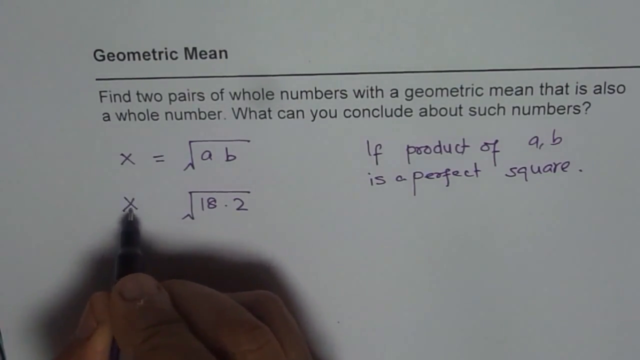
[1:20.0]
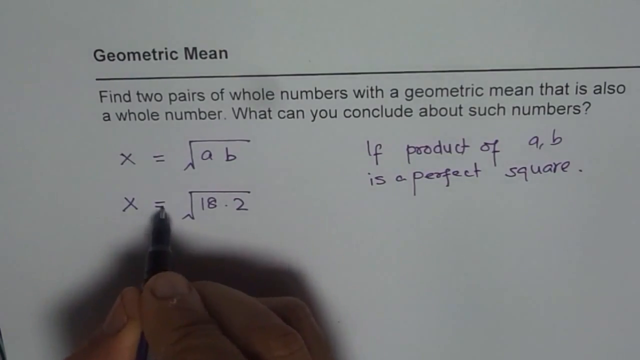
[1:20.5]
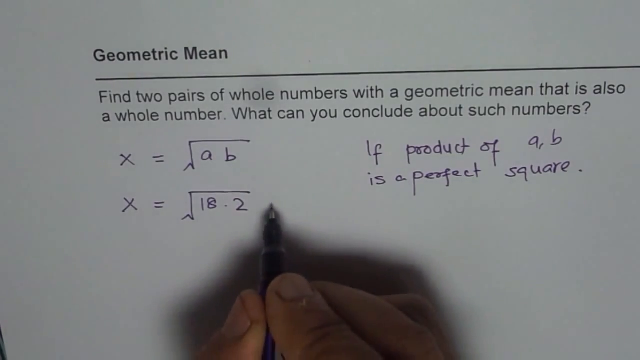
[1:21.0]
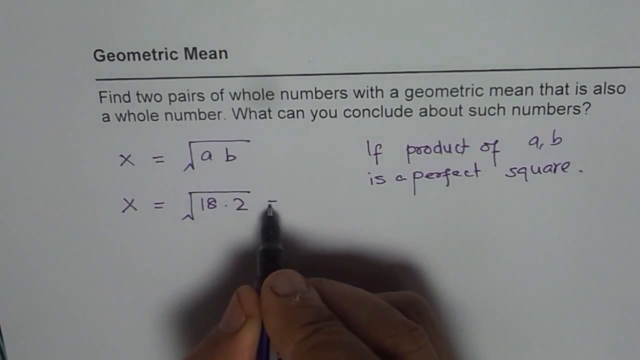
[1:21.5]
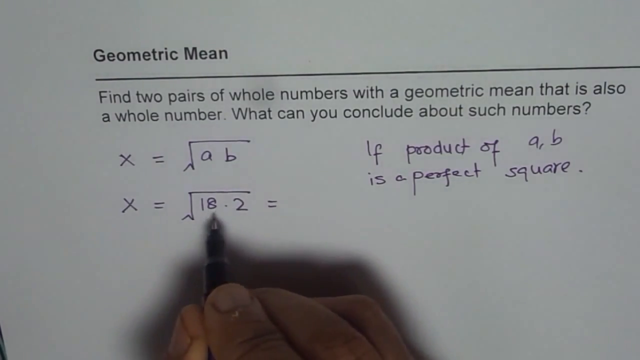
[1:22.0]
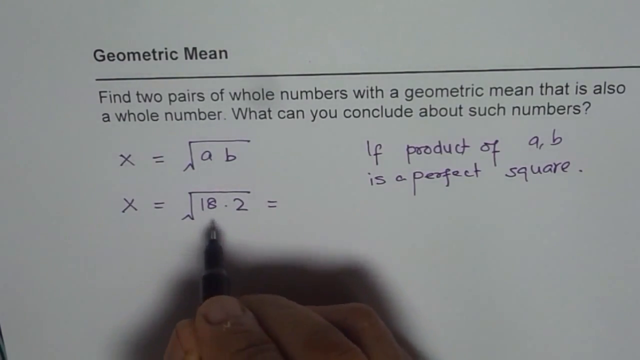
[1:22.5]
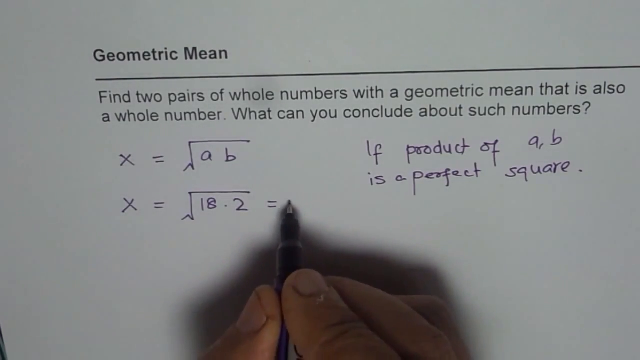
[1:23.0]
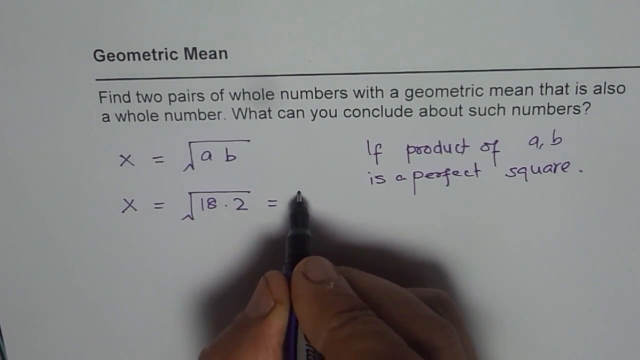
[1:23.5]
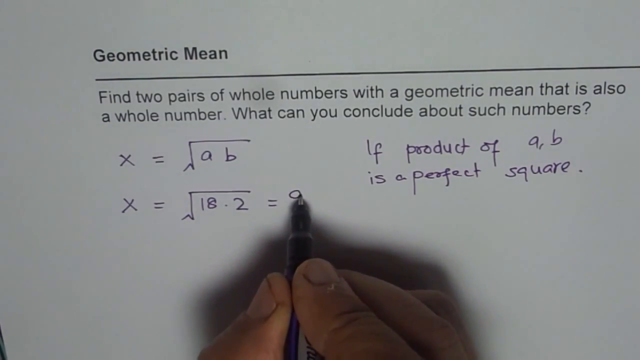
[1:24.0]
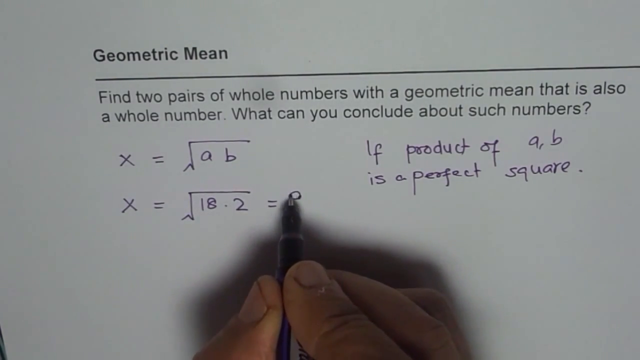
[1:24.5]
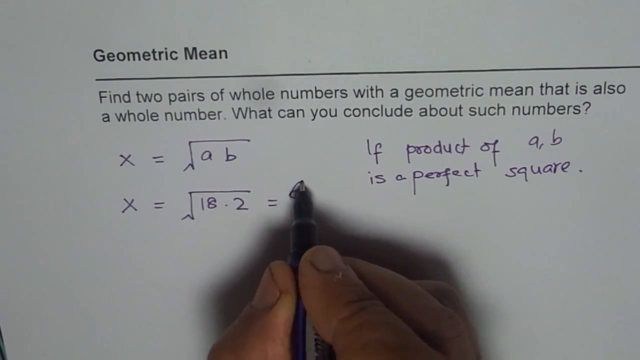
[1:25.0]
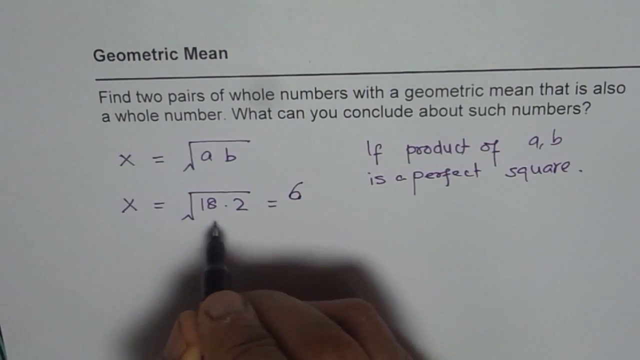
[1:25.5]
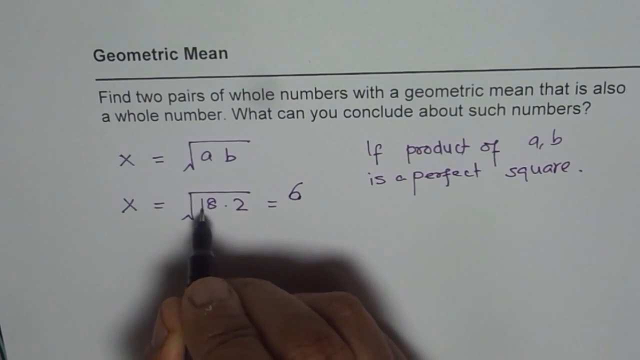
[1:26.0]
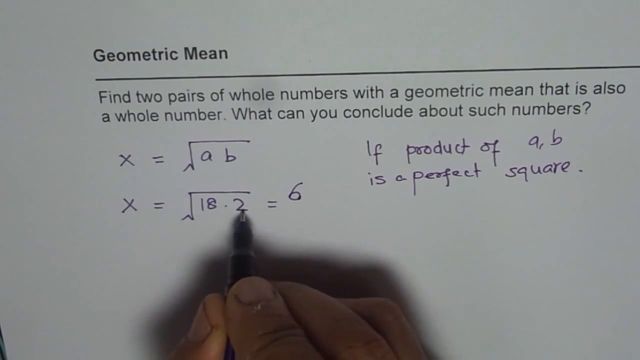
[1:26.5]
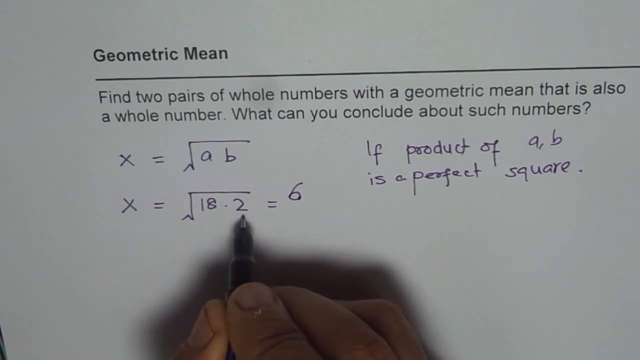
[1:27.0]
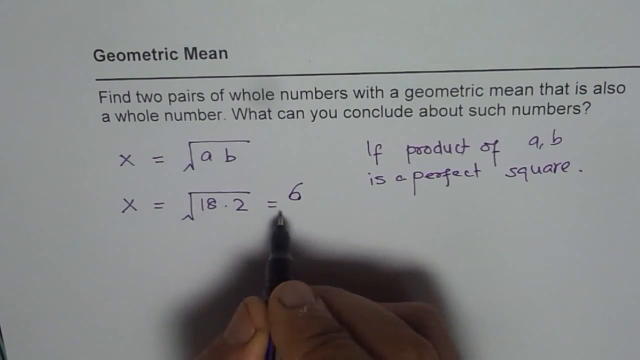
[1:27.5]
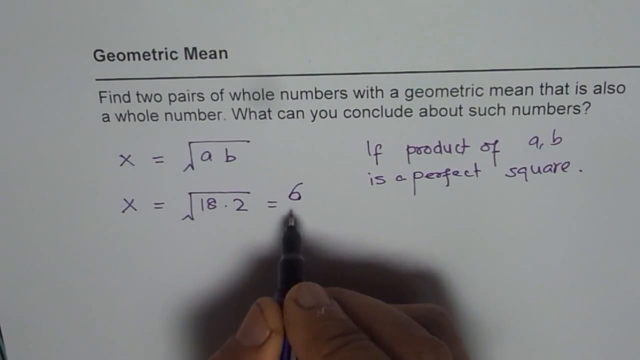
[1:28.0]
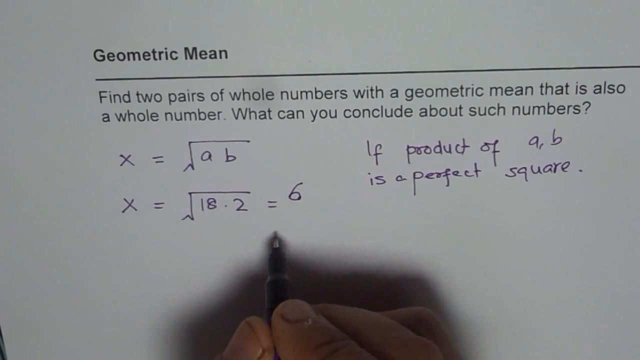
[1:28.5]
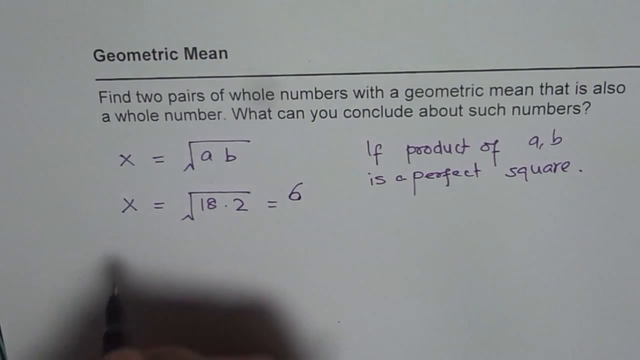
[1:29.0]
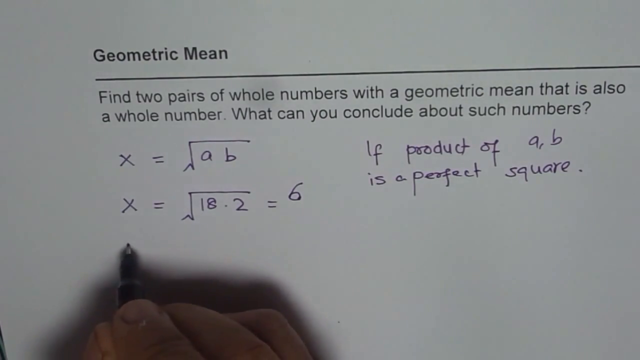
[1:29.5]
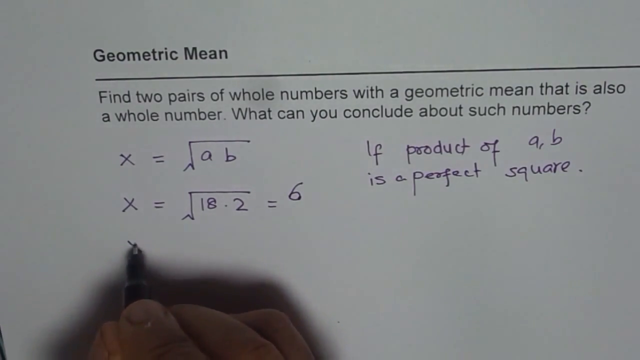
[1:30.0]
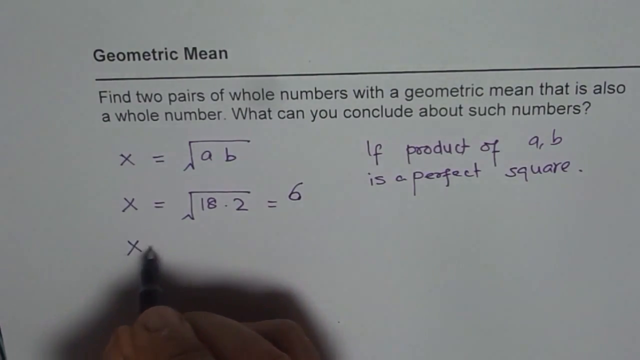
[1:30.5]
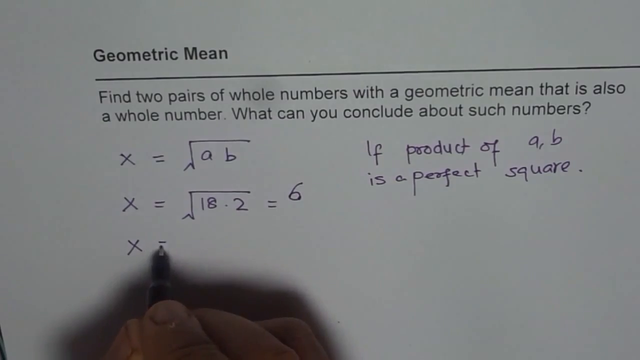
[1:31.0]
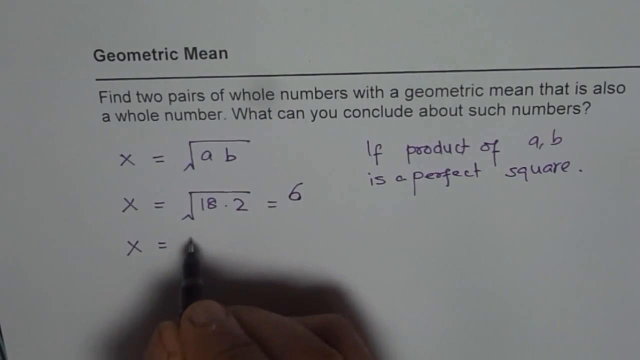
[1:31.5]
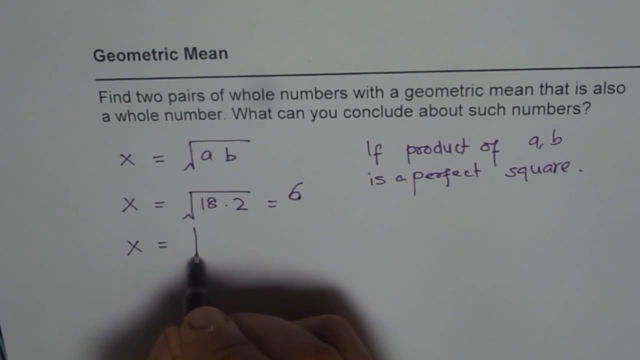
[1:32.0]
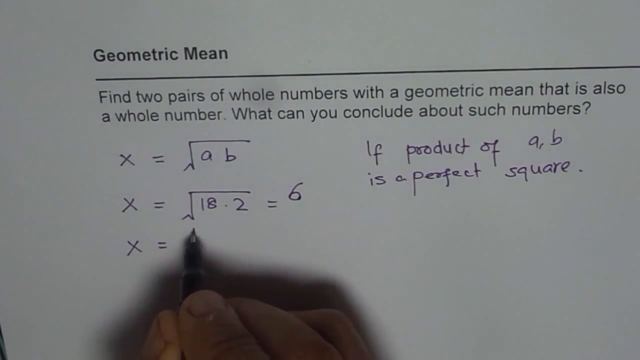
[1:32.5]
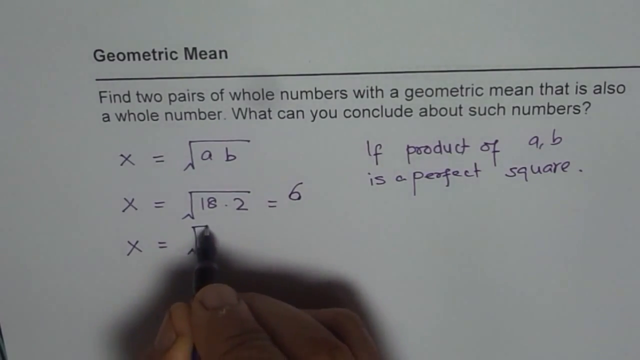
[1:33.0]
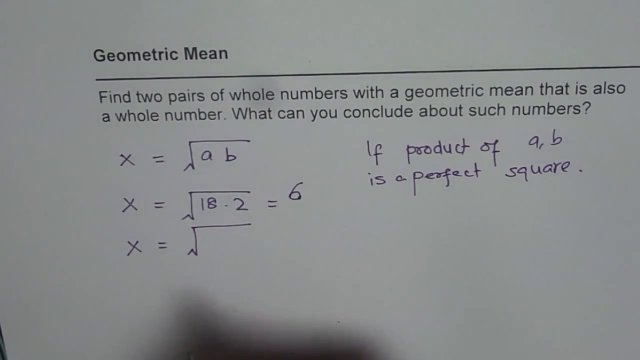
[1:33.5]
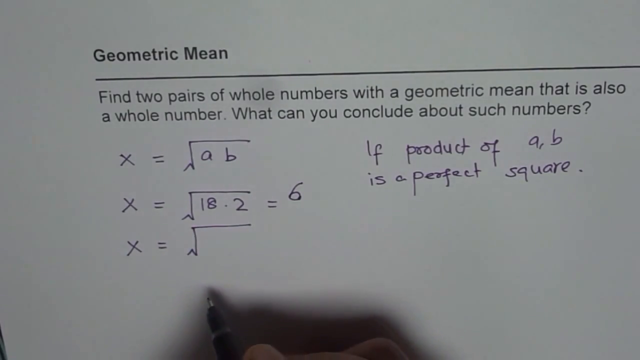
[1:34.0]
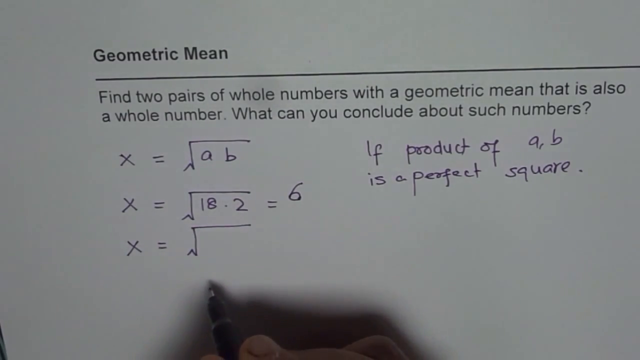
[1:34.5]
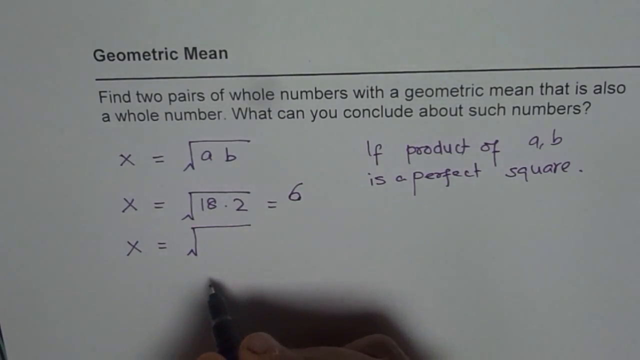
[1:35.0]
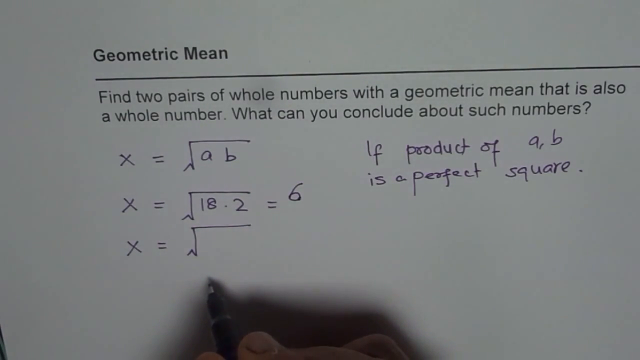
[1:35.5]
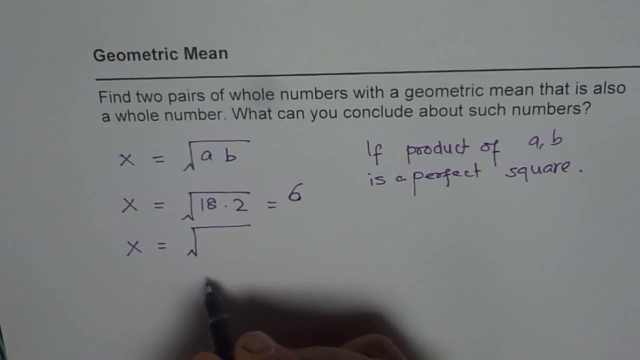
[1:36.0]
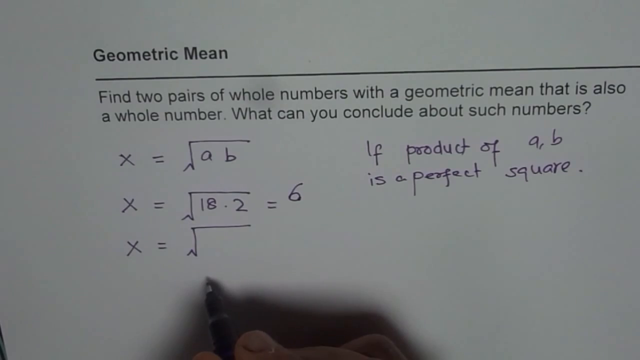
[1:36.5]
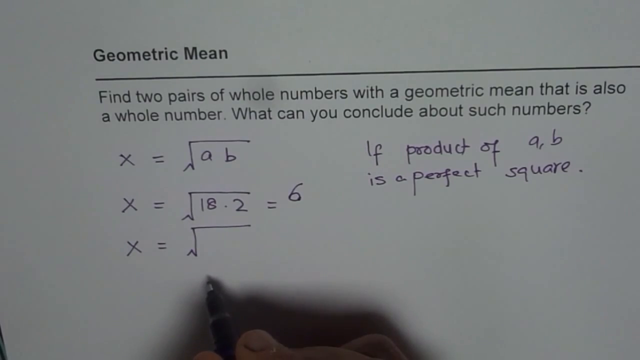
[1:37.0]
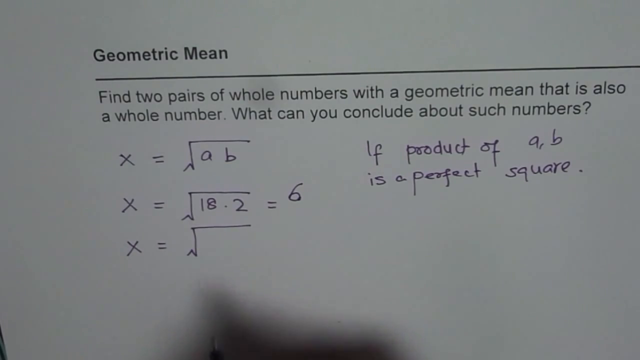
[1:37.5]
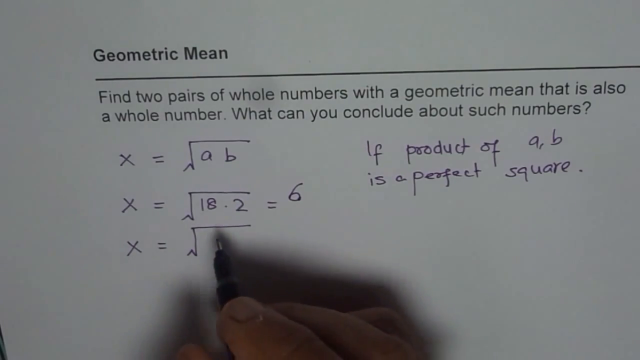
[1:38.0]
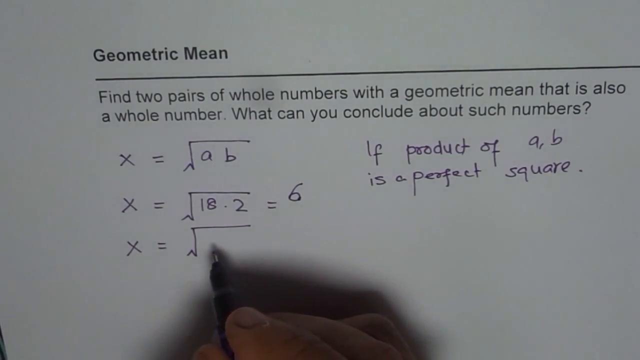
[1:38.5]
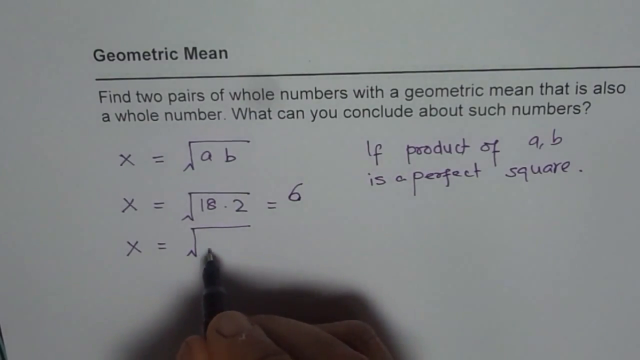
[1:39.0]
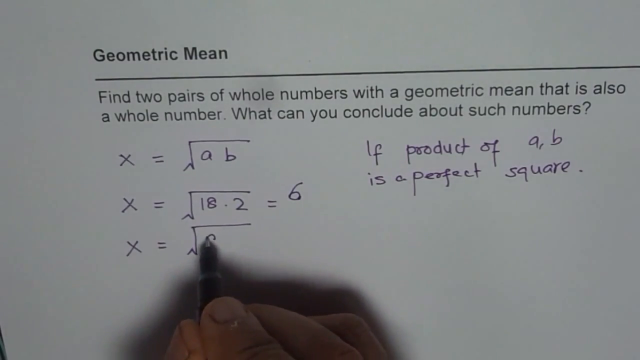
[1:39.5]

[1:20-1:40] The man, with dirty fingernails and cuticle problems, uses the black pen. He writes an equal sign between the X he just wrote and the division box with 18.2 in it, then skips to the right side of the box and writes an equal sign next to the number 2. He points under the 2 and under the 18, goes back to the equal sign to the right of the 2, and starts to write what looks like a 9, then hesitates and turns the 9 into a 6, which is to the right of and slightly above the equal sign. He goes back and points at the 18 and the 2 in turn, then at the 6 he just wrote. He comes down below the second X, writes another X and an equal sign, starts a division box, holds his pen just below it, and begins to write an 8 inside the box.